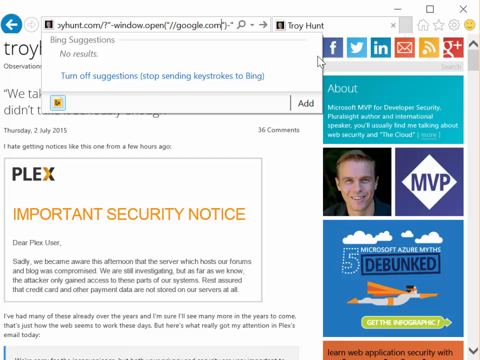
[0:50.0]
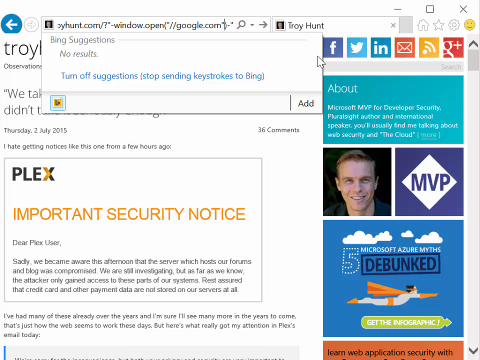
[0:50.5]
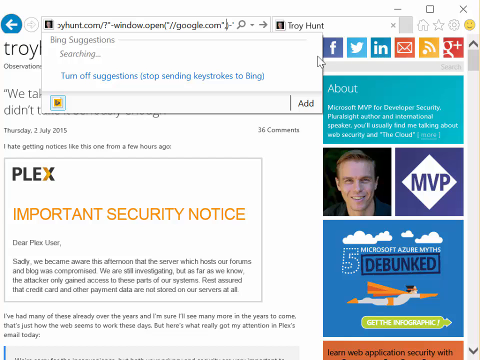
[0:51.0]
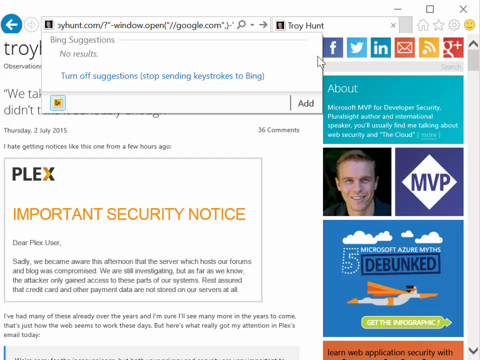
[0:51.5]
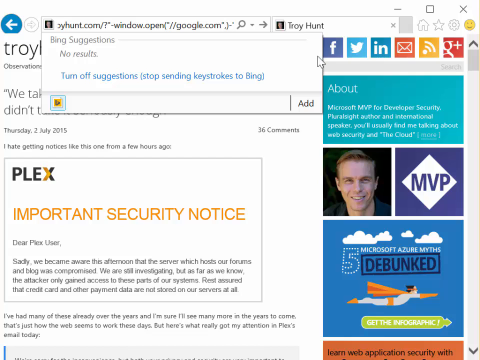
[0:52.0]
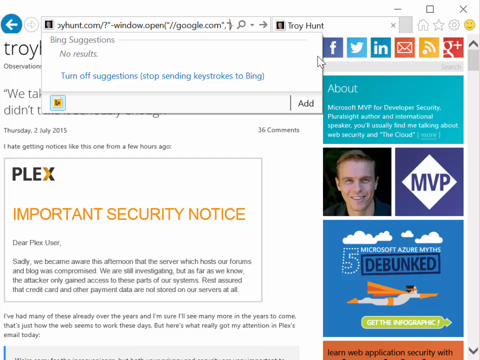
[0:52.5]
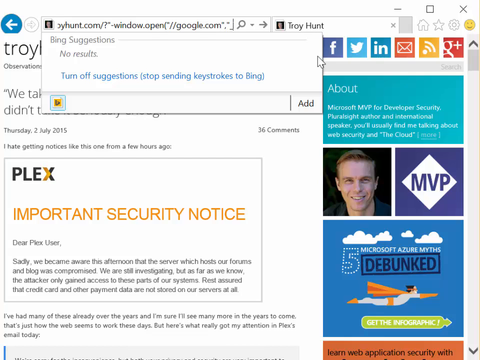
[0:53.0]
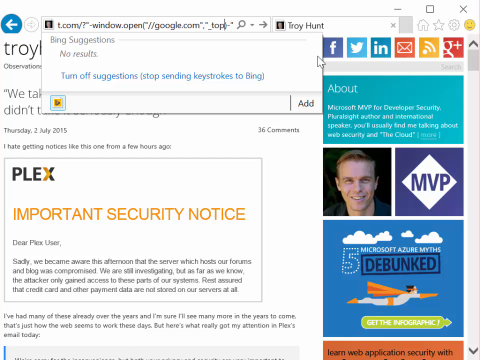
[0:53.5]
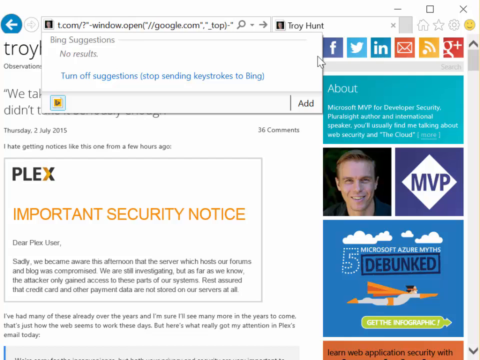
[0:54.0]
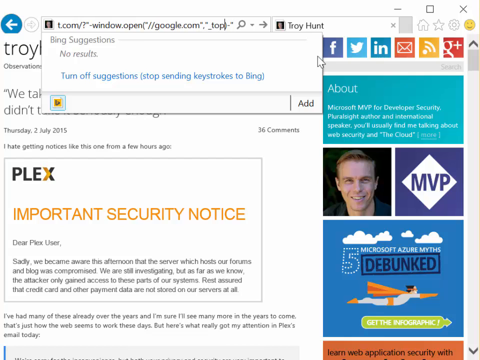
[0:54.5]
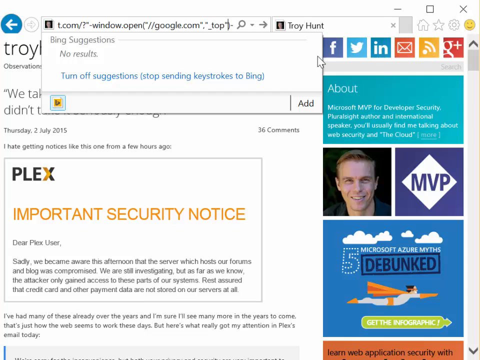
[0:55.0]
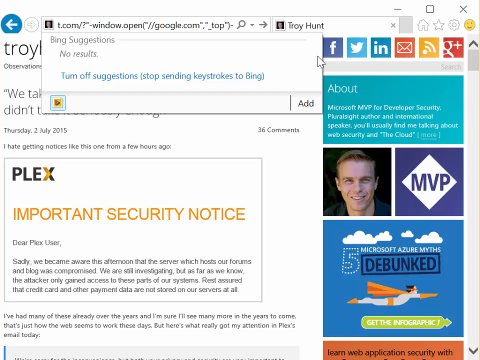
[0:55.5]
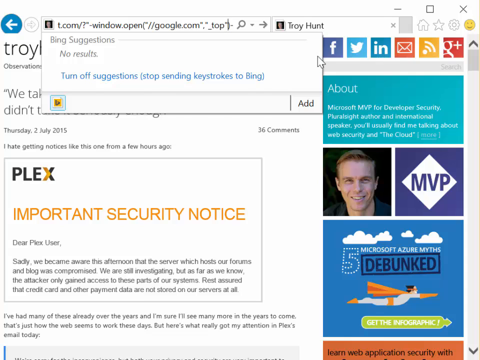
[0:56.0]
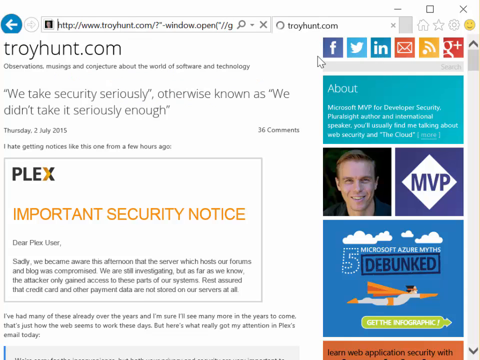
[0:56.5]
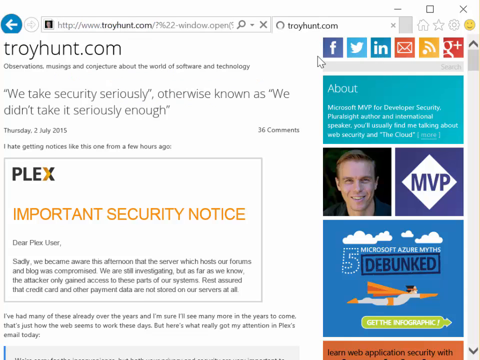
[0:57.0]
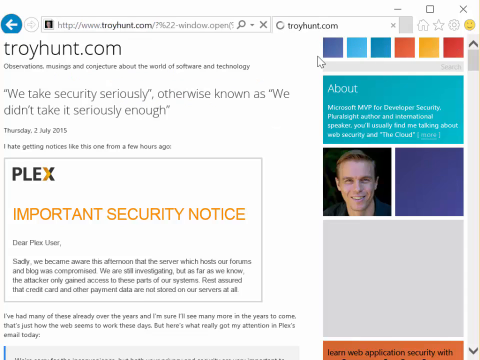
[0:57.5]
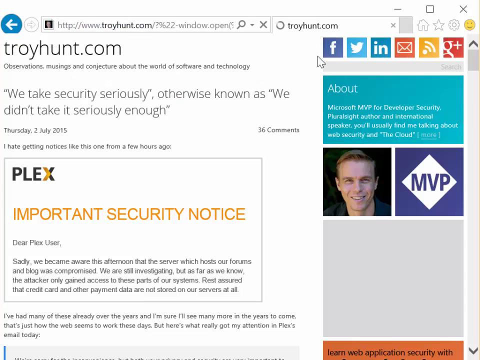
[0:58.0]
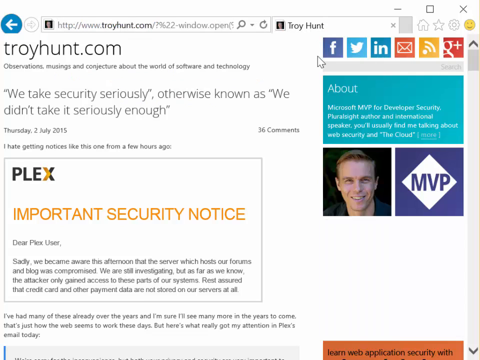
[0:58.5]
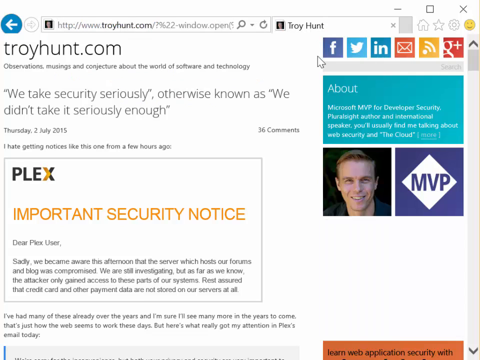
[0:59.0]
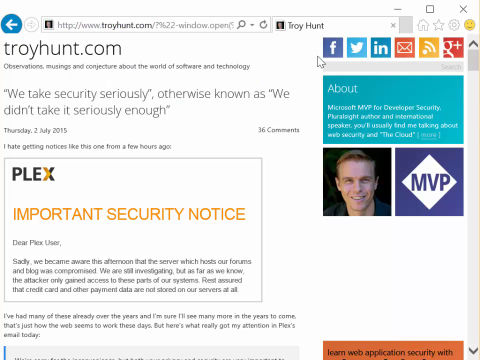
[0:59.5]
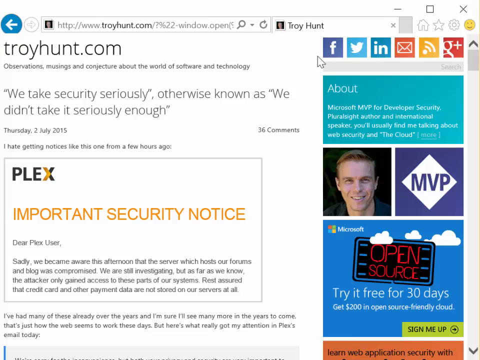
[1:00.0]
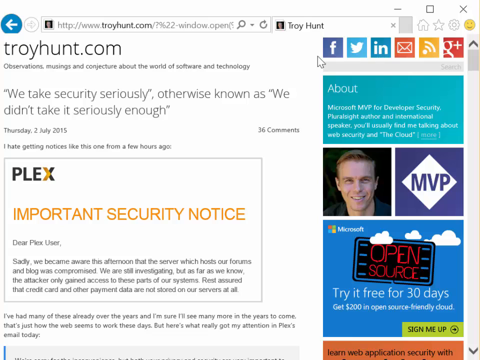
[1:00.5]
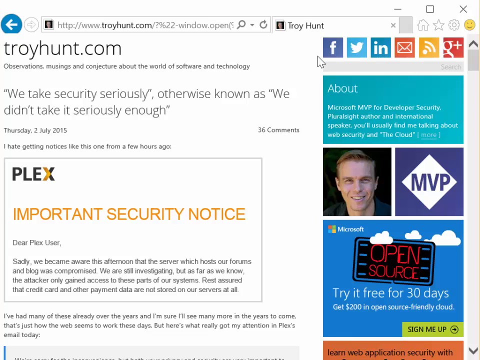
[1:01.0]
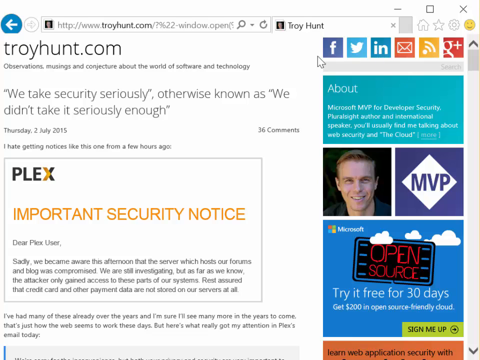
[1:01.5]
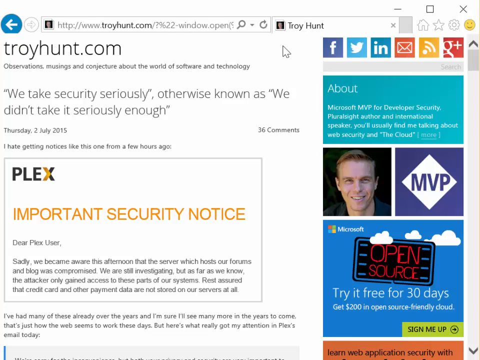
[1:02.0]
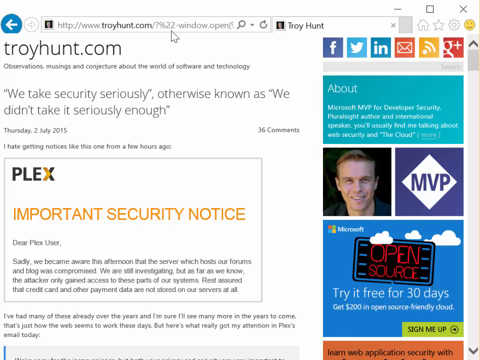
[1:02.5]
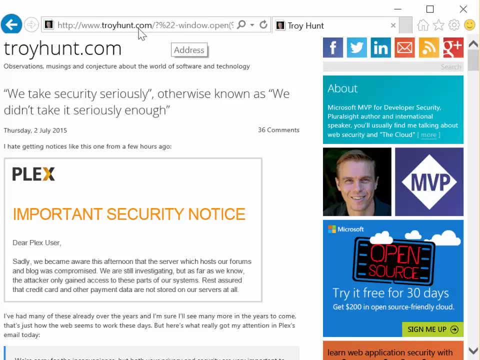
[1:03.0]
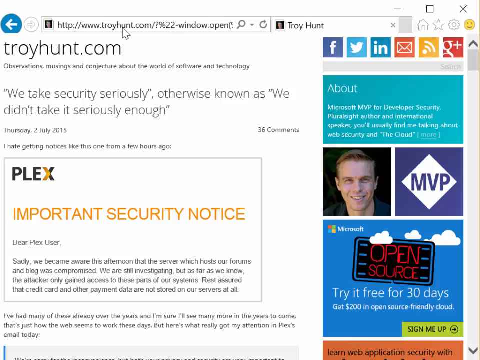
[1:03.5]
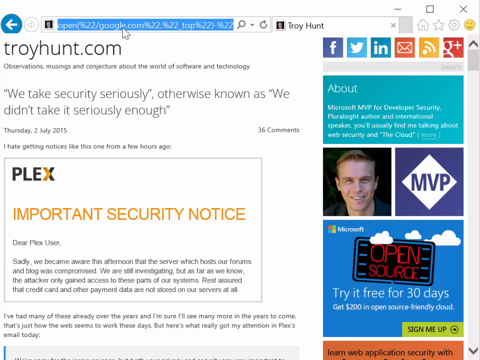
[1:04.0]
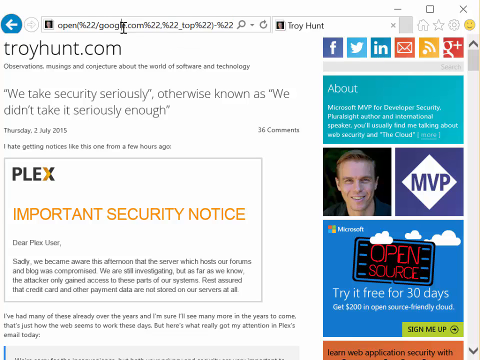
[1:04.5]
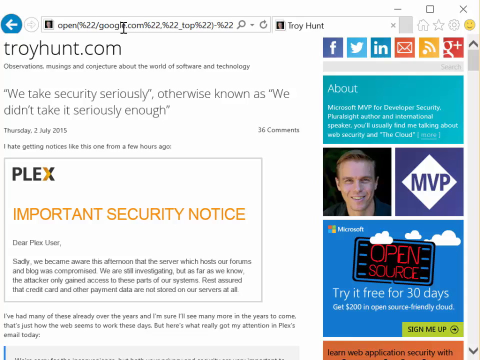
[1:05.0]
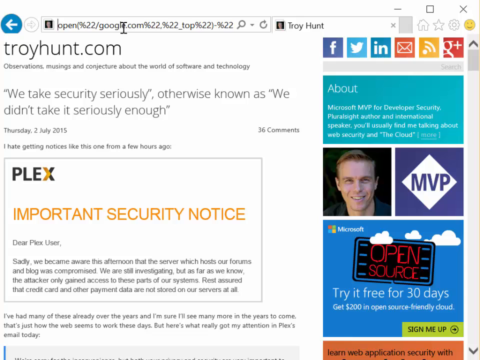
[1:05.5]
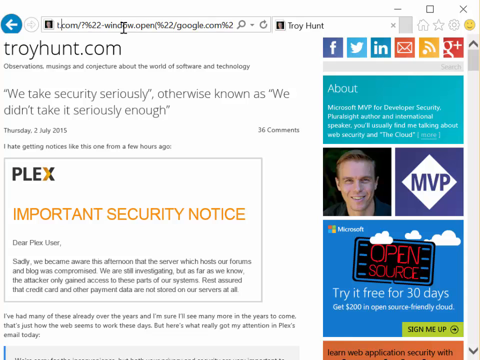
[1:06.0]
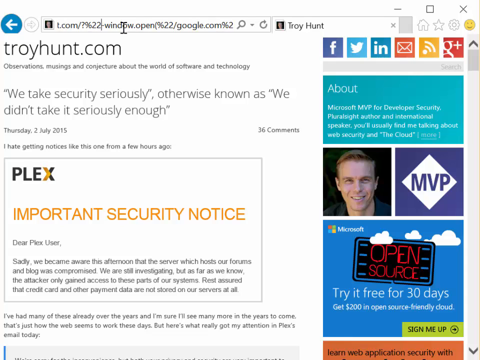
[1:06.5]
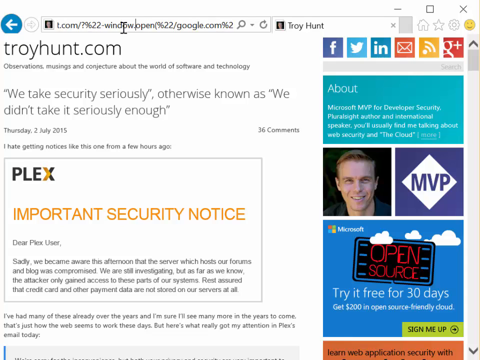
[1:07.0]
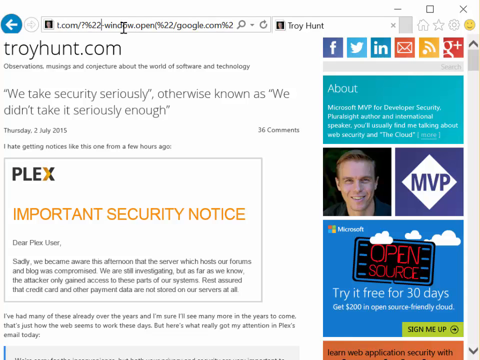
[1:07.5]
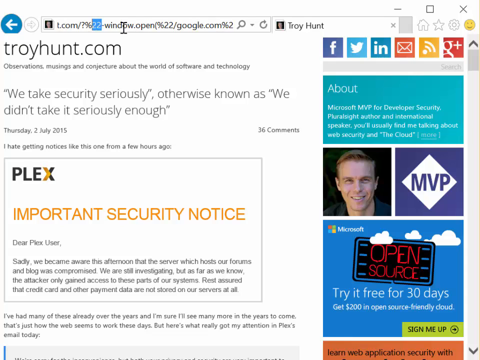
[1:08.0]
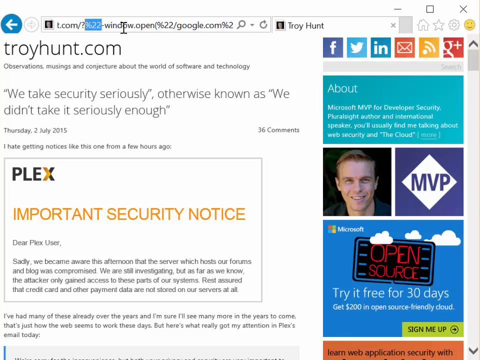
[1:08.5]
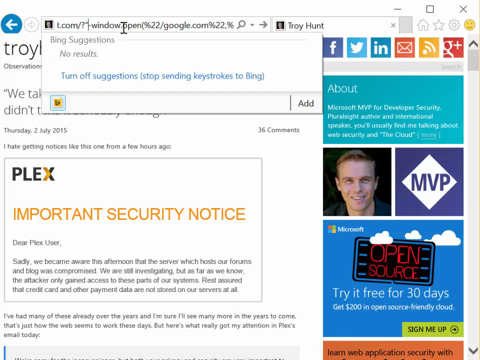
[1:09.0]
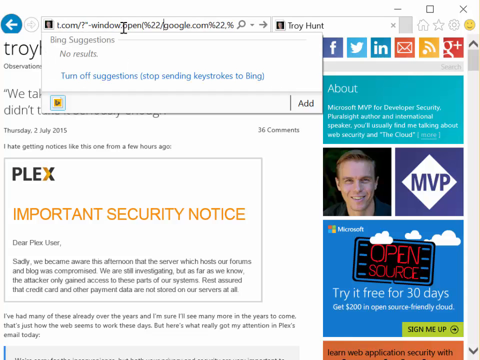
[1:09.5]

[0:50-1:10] The user appears to keep typing other options into the address bar. In the middle of the site is a notice reading "Plex" and "important security notice," followed by the text "dear Plex user, sadly we became aware this afternoon that the server which hosts our forums and blog was compromised. We are still investigating, but as far as we know, the attacker only get access to these parts of our system. Rest assured that credit card and other payment data are not stored on our servers at all." The user continues typing in the address bar, apparently entering a link for Google to open another window. Bing suggestions pop up, but the list contains no suggestions. The user seems to be trying to get to Google after adding a couple of other lines of instructions in the address bar; the goal is unclear.